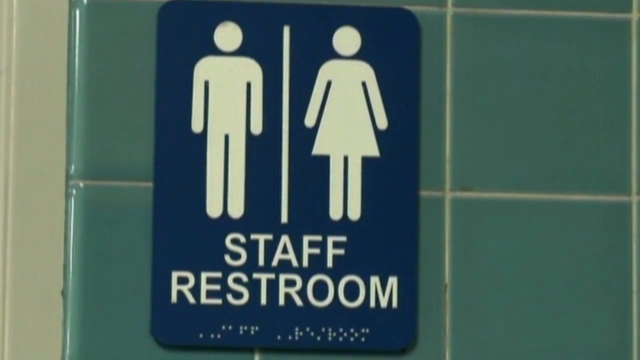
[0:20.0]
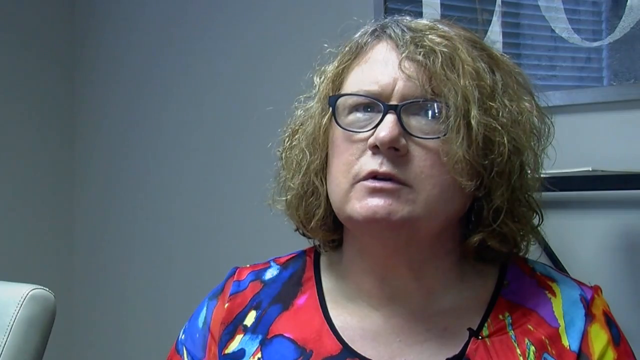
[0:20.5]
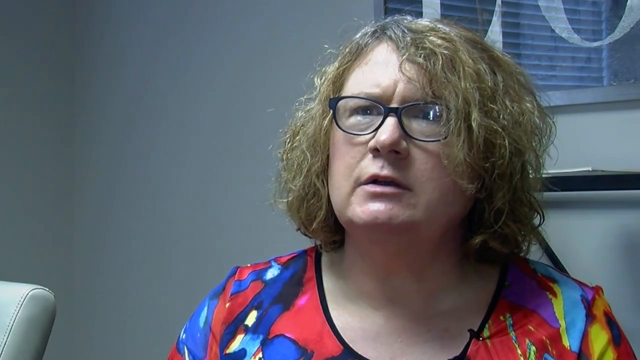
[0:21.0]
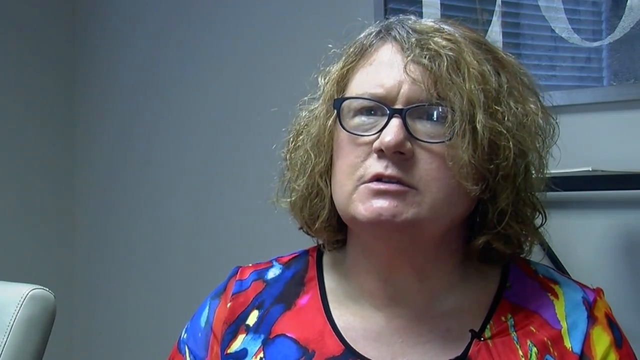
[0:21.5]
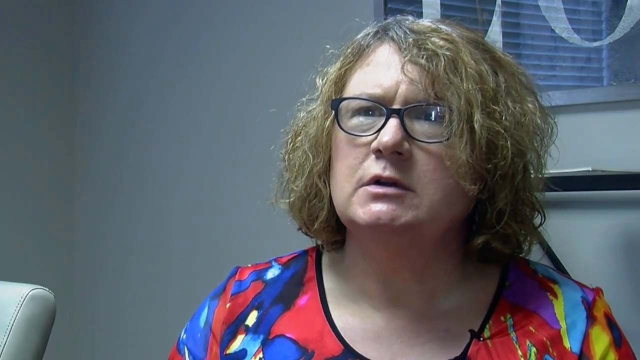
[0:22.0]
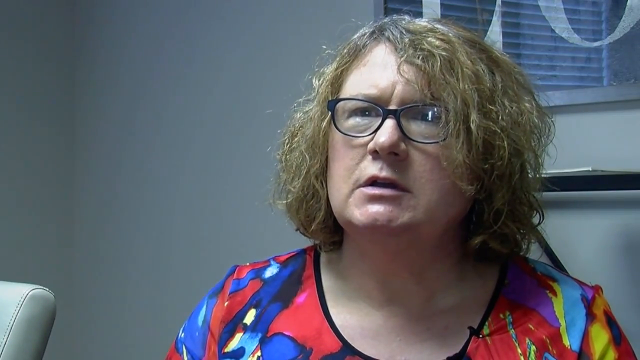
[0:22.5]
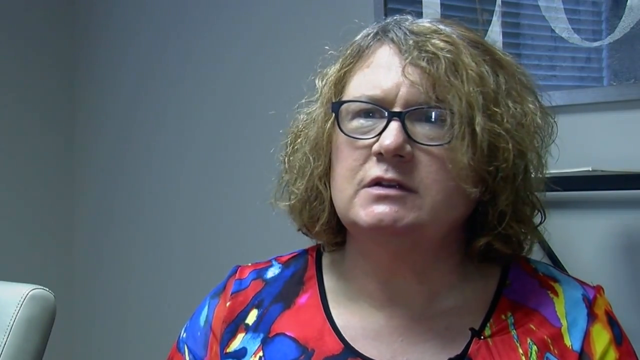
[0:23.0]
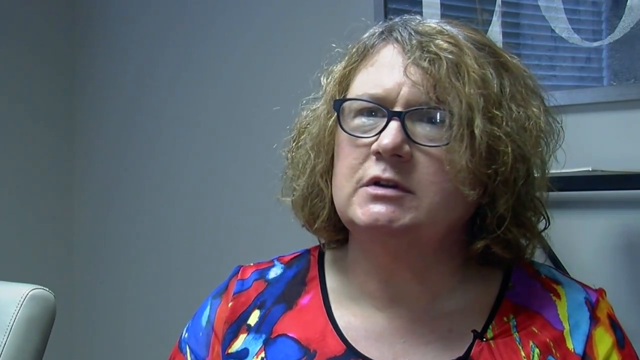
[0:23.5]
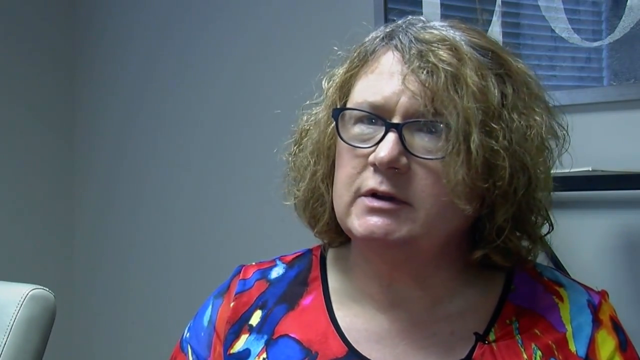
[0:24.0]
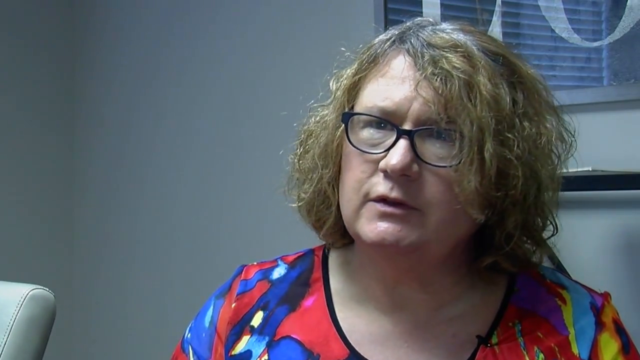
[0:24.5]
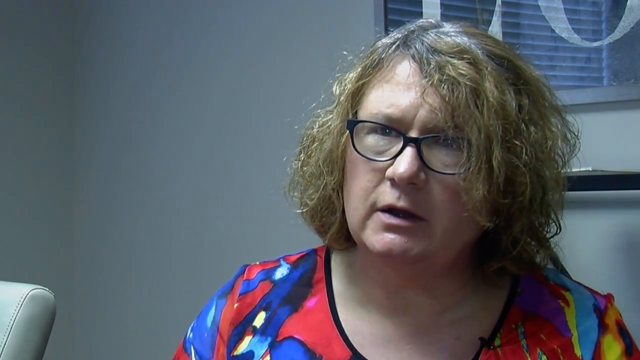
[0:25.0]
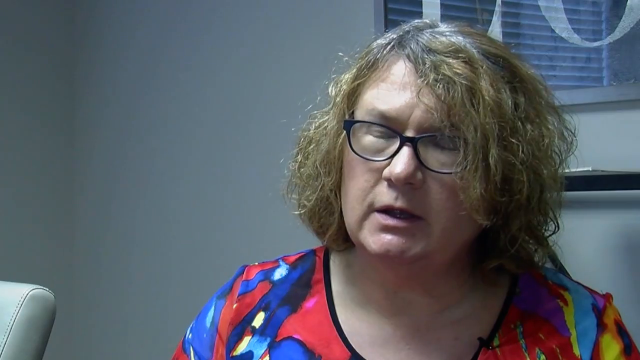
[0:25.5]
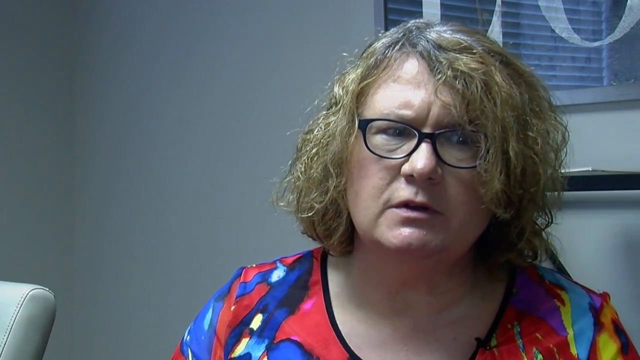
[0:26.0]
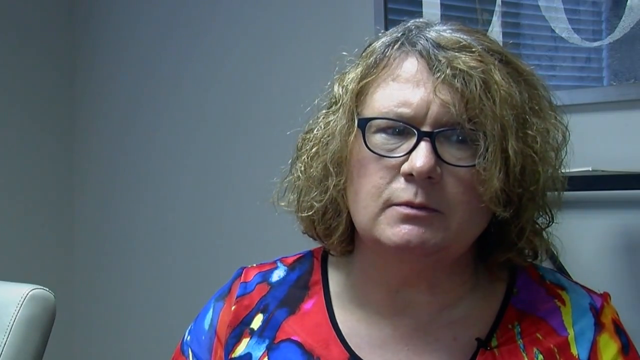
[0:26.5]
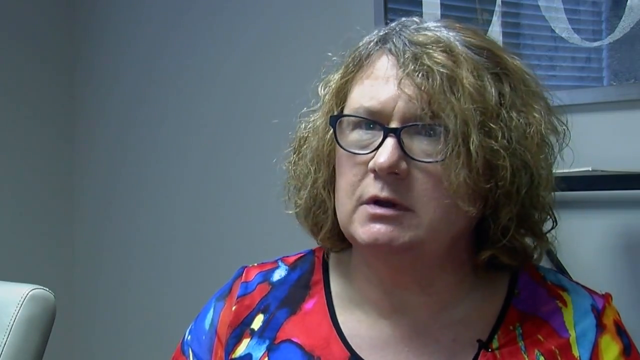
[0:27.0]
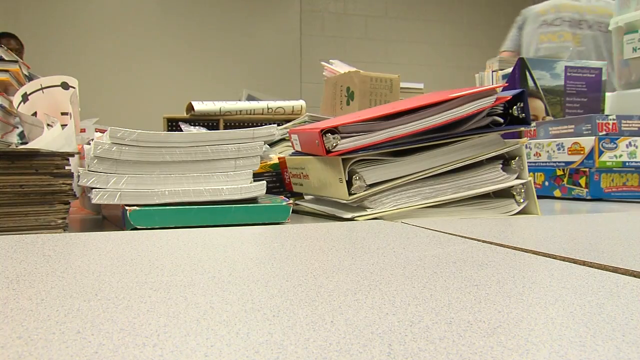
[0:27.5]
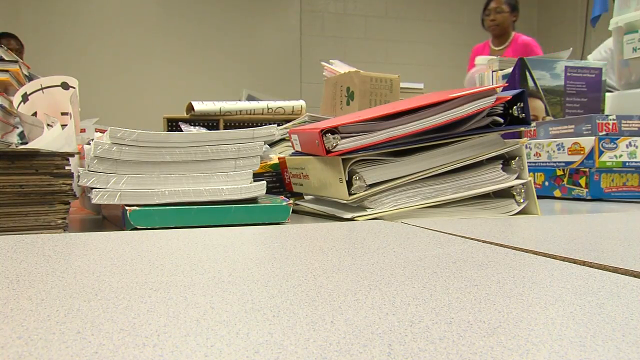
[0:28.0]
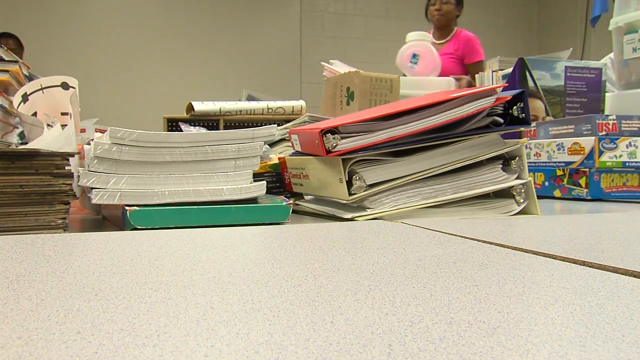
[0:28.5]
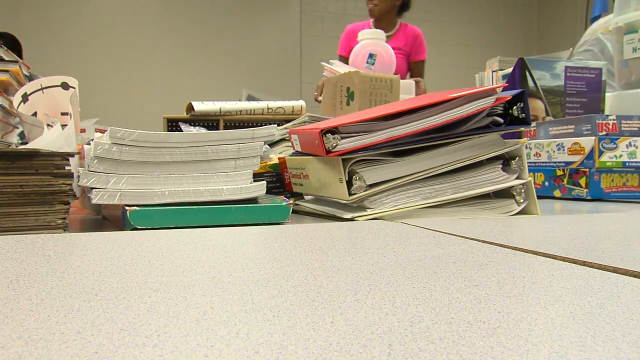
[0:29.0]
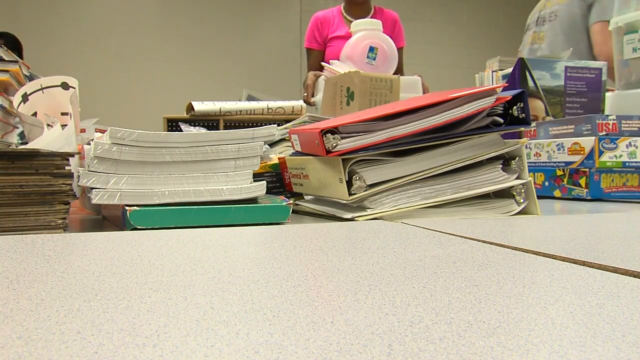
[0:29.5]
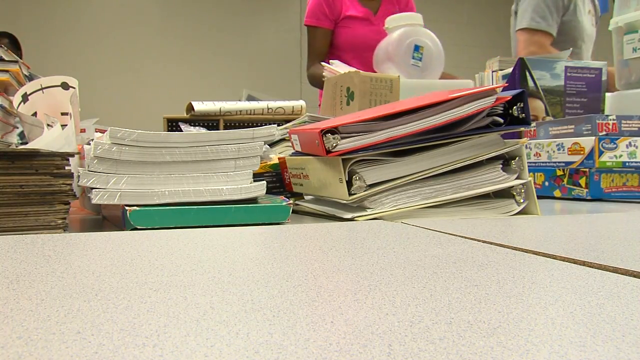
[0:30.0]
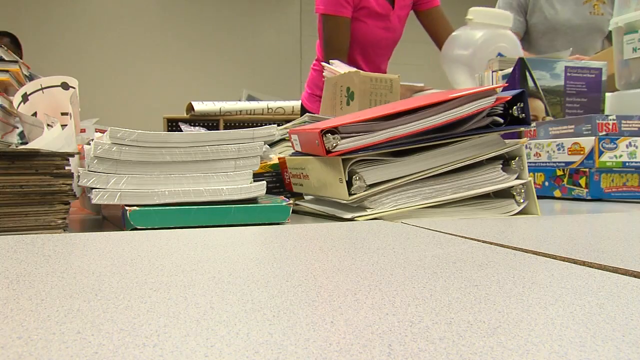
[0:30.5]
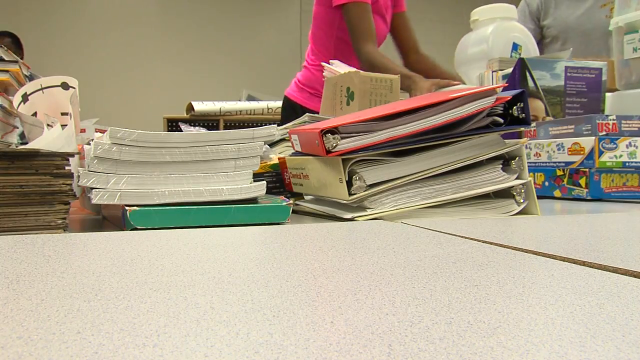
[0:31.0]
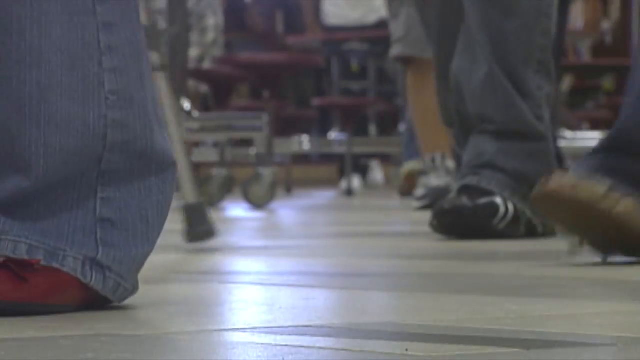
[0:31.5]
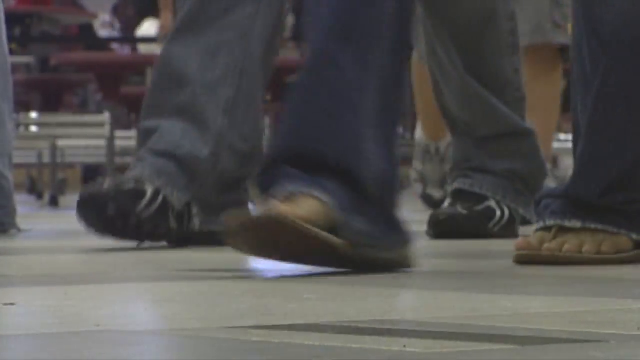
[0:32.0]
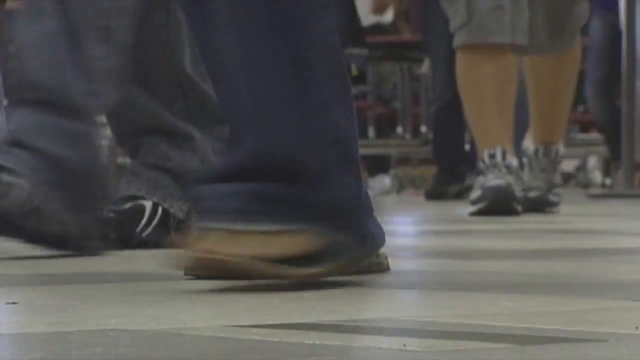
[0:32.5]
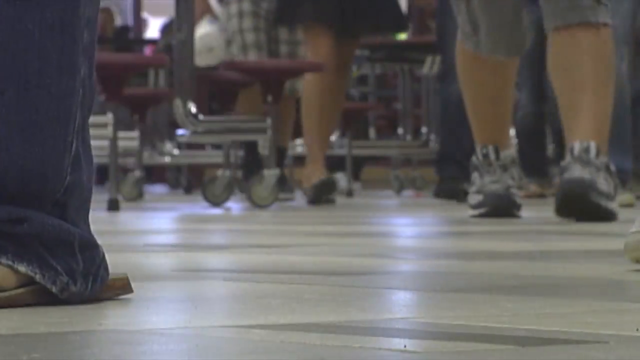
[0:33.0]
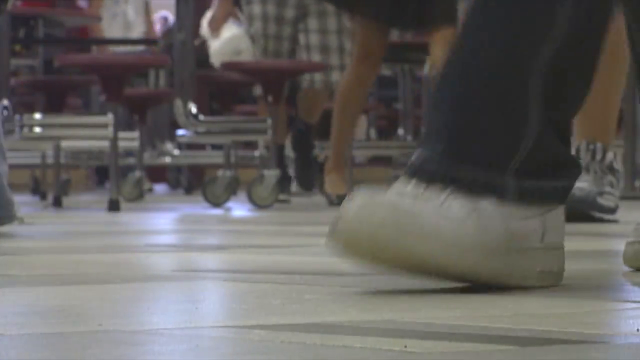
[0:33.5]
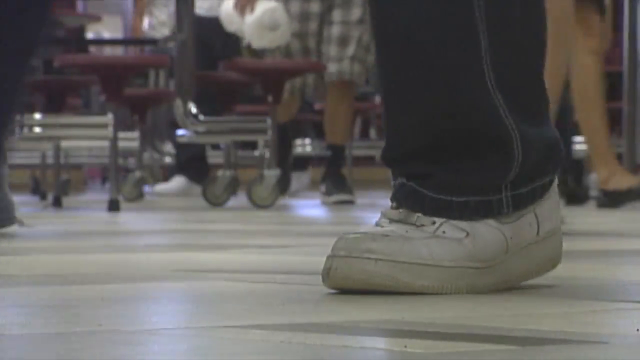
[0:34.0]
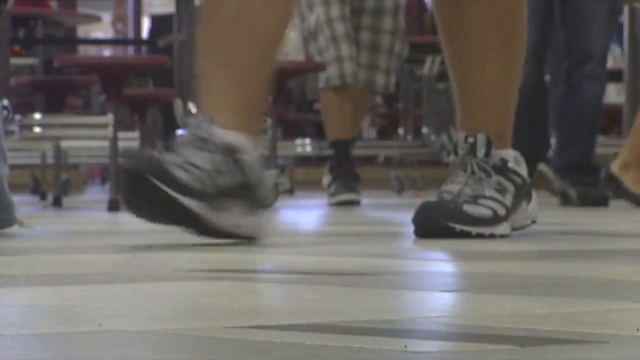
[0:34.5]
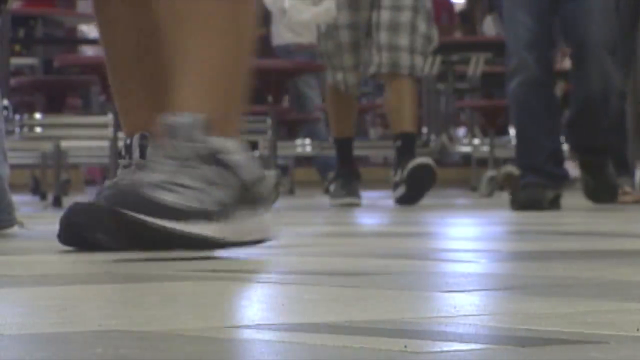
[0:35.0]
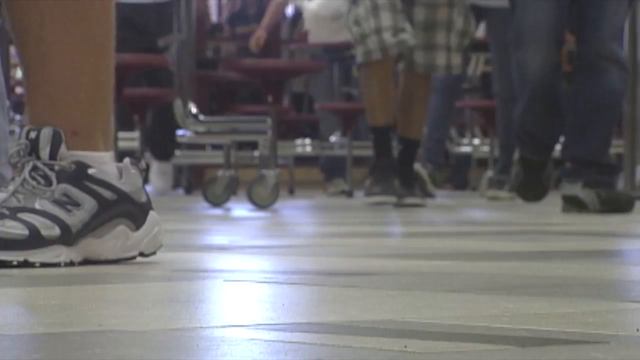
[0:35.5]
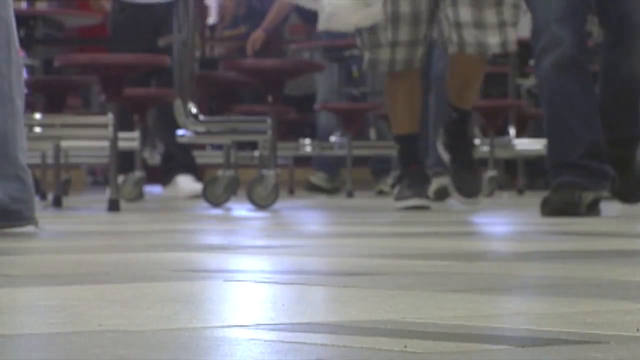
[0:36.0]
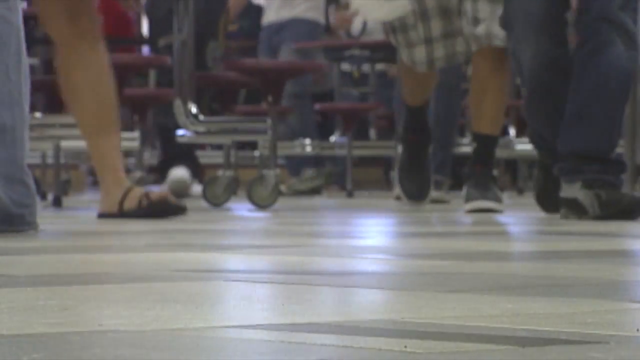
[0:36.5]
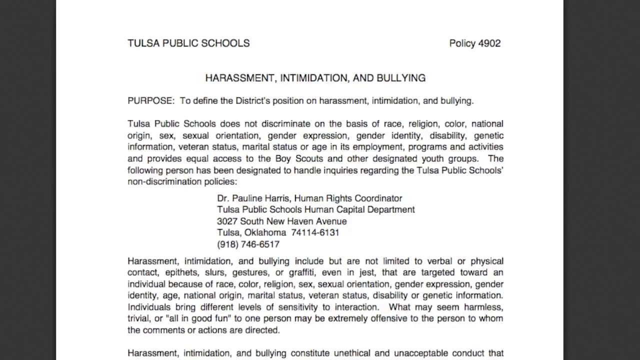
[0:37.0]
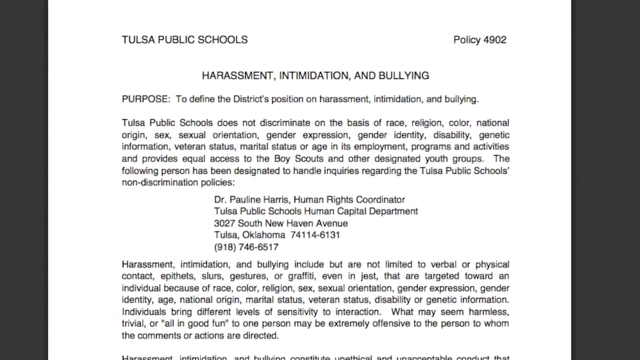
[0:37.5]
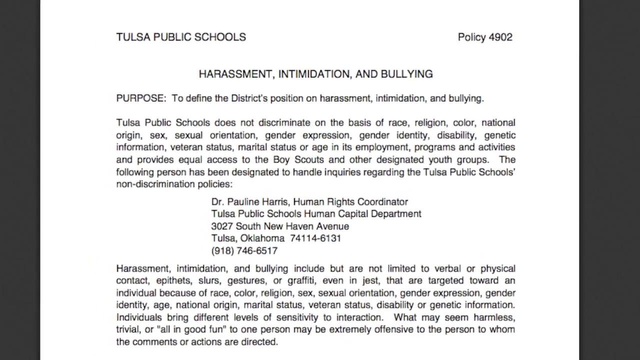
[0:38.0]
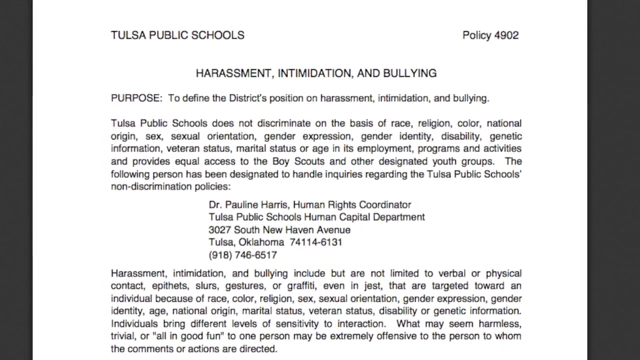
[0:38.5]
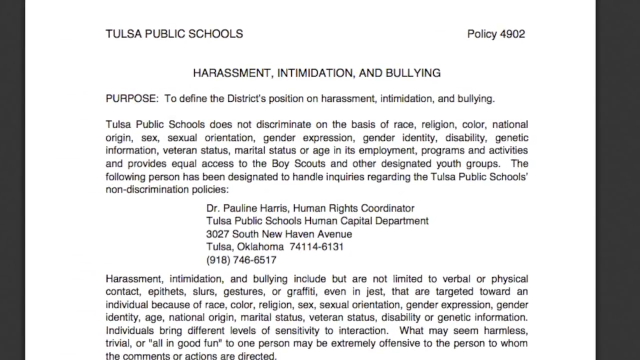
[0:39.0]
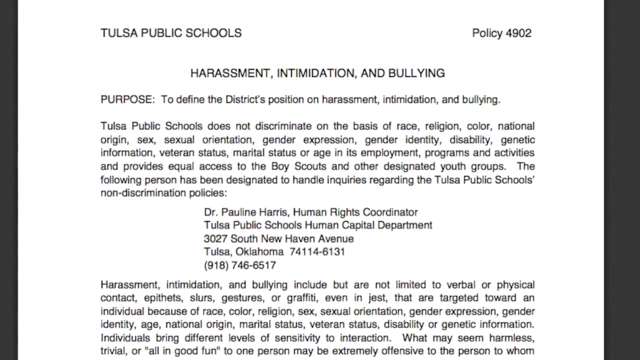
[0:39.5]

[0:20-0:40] The video returns to the woman with short, curly, messy, textured blonde hair with gray roots, wearing glasses and a multicolored red, blue and yellow outfit, as she speaks. The camera then shows a view from a white desk, with stacks of binders and paper and what looks like board games or books stacked up on the desk in the background. A woman in a pink shirt walks in the background and sets something down near the back of the table. The scene changes to a ground-level camera filming people's feet as they walk by, apparently in a gymnasium or stadium with chairs, where people walk in front of the chairs and go to sit down. A white background then appears with black text that says "Tulsa Public Schools Harassment Intimidation and Bullying Policy 4902," along with lots of other text on the screen.